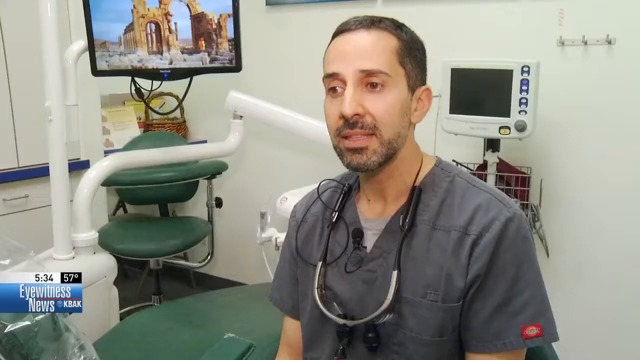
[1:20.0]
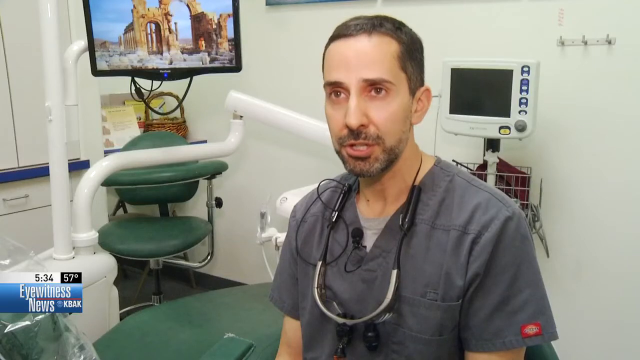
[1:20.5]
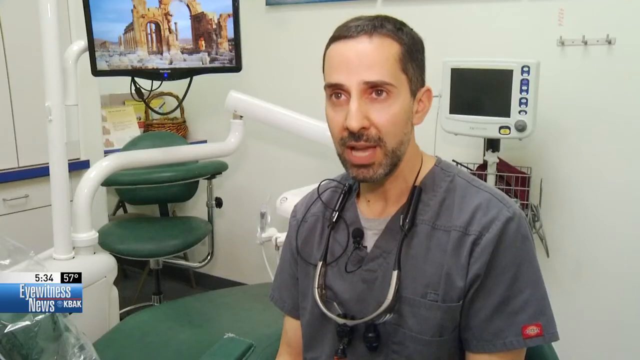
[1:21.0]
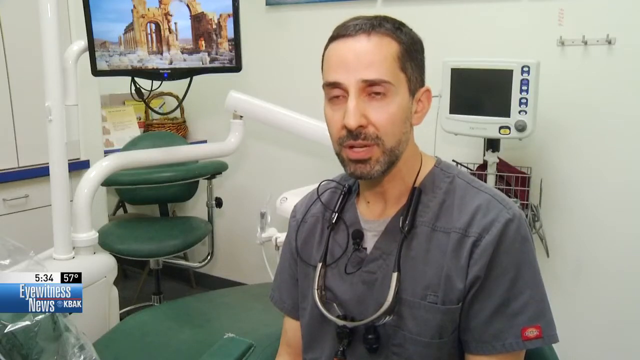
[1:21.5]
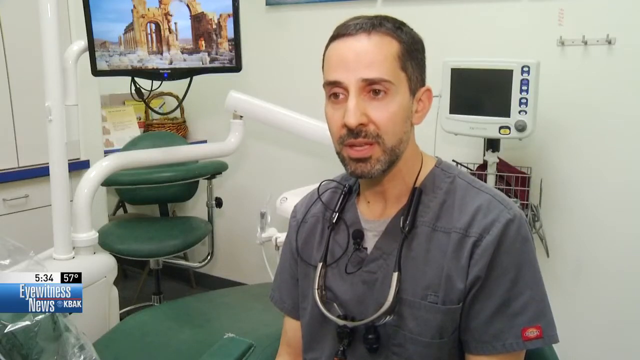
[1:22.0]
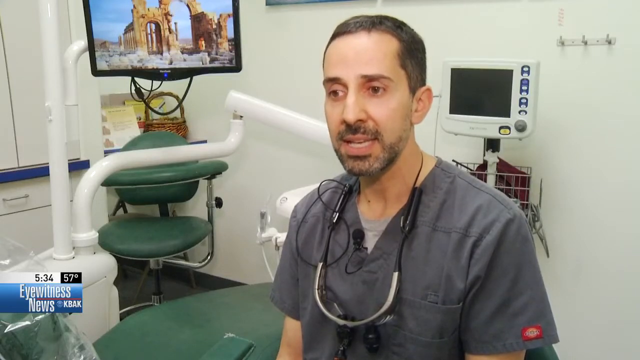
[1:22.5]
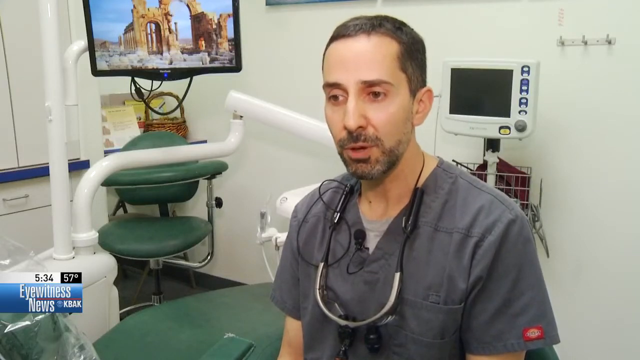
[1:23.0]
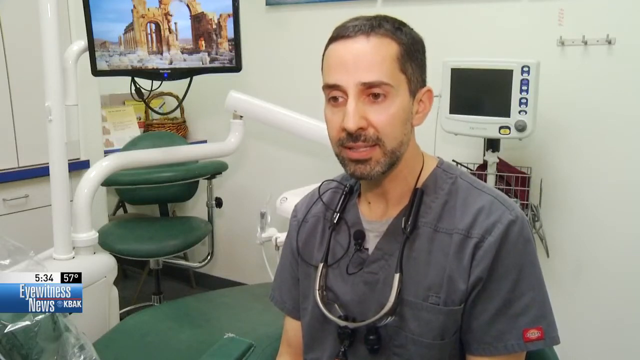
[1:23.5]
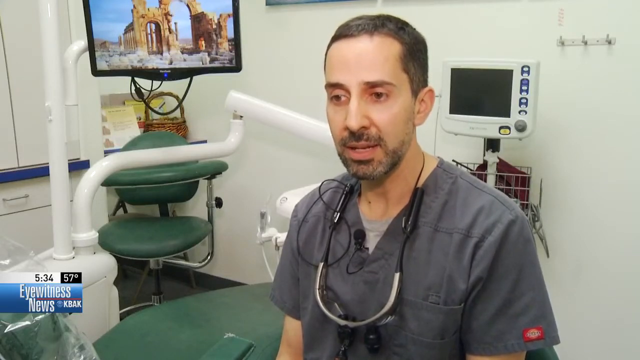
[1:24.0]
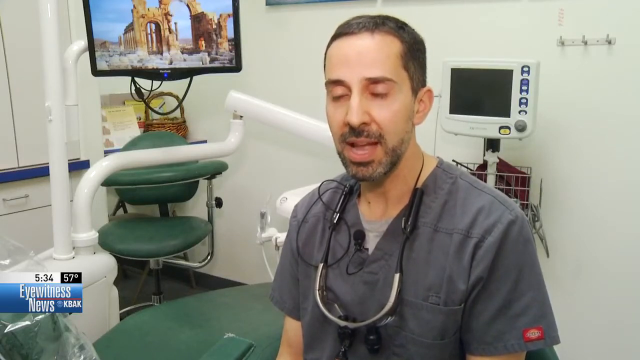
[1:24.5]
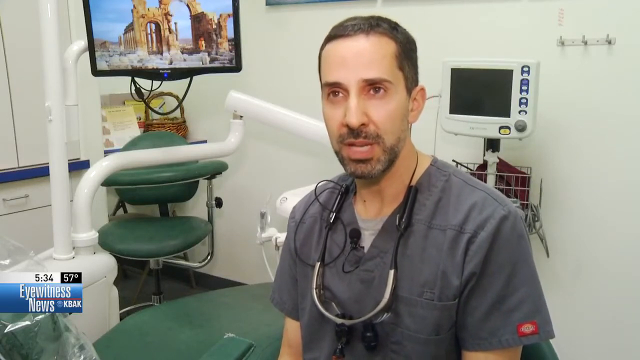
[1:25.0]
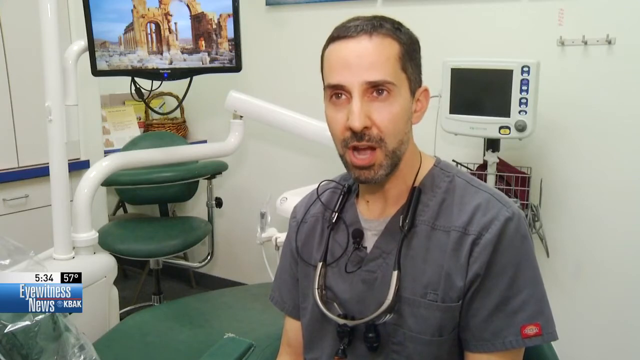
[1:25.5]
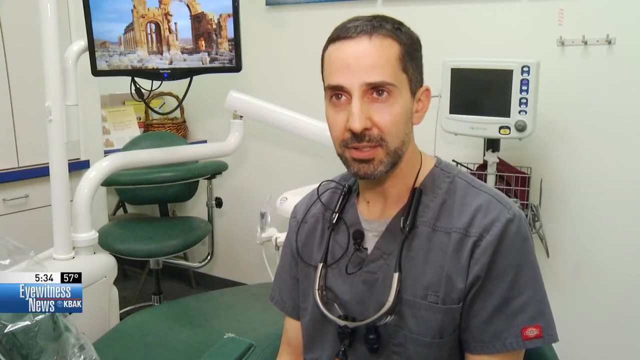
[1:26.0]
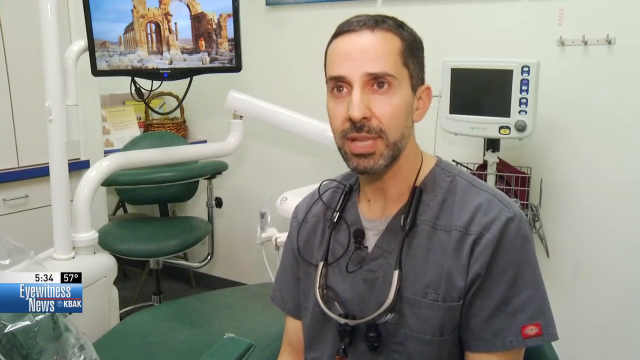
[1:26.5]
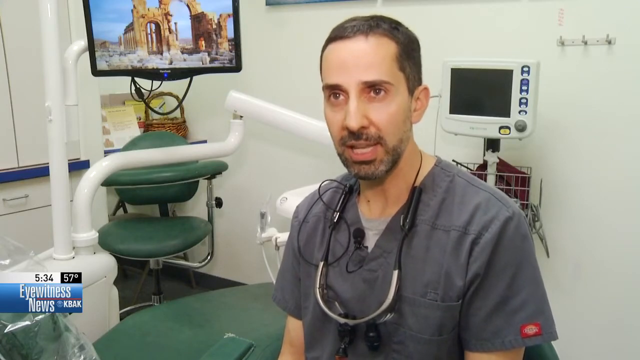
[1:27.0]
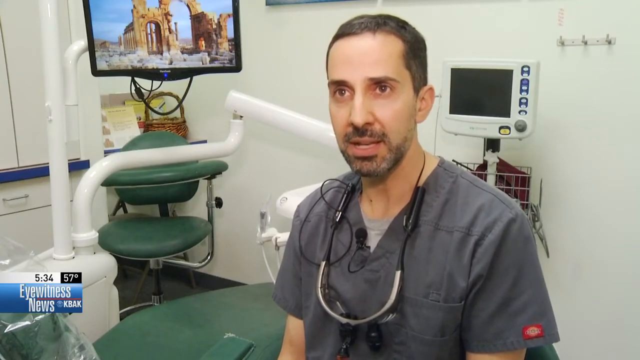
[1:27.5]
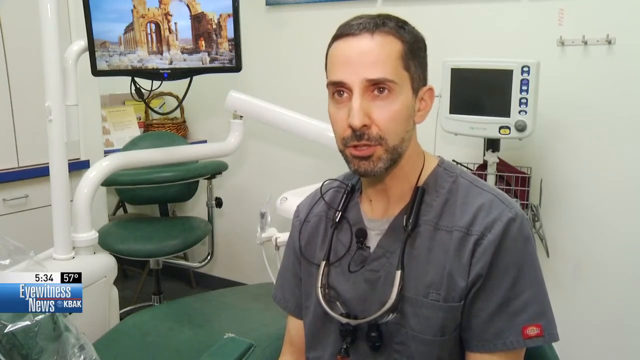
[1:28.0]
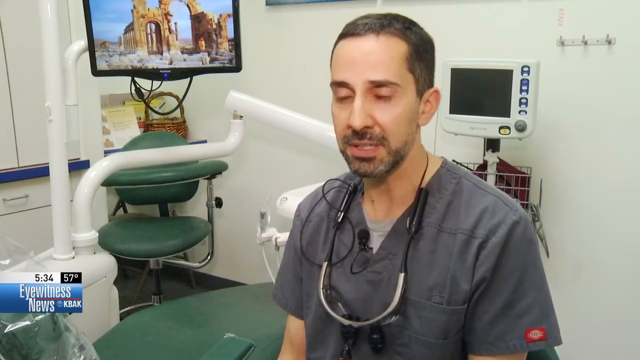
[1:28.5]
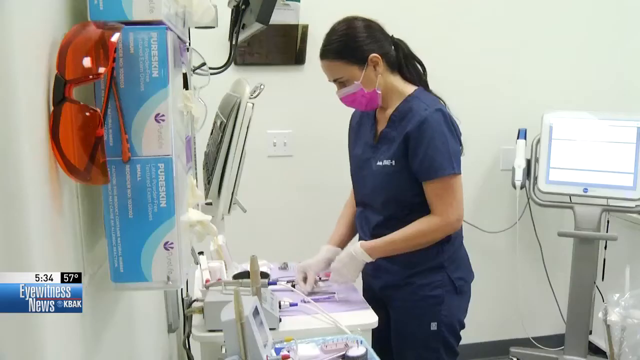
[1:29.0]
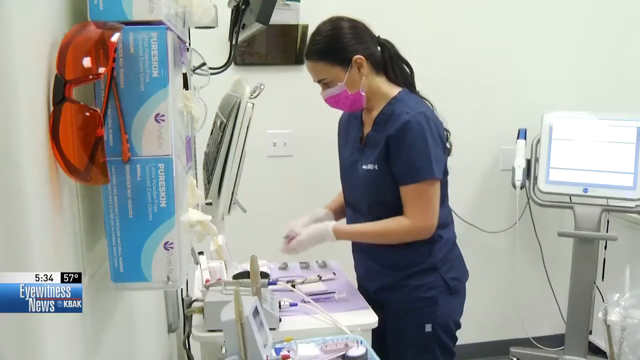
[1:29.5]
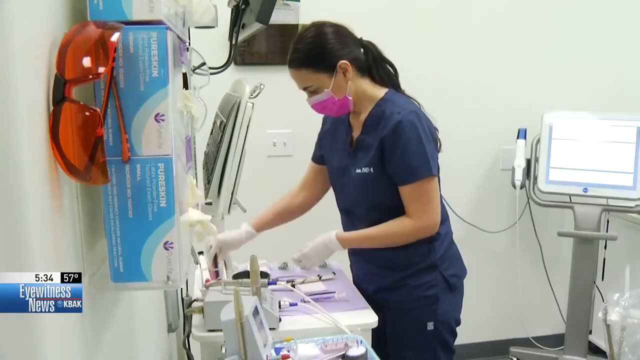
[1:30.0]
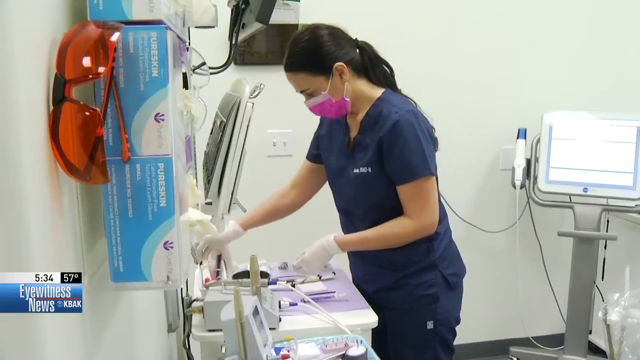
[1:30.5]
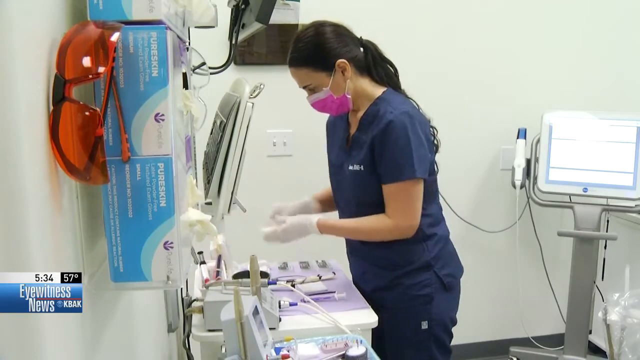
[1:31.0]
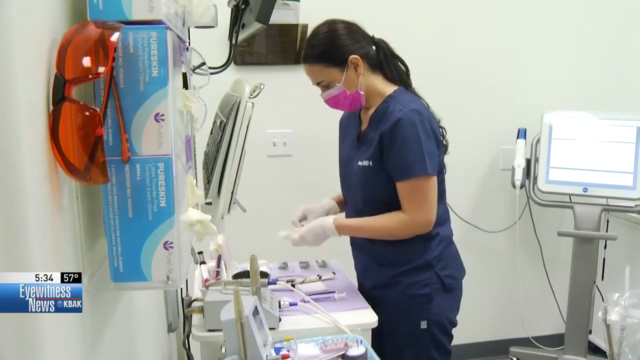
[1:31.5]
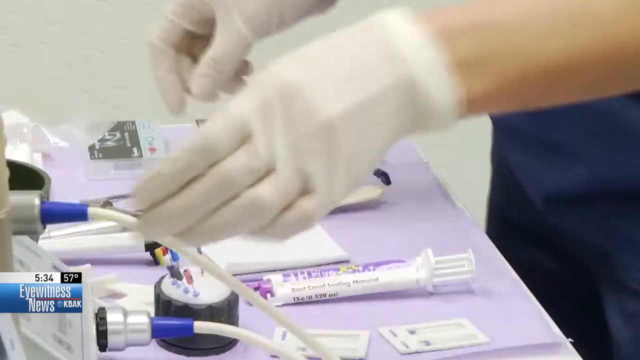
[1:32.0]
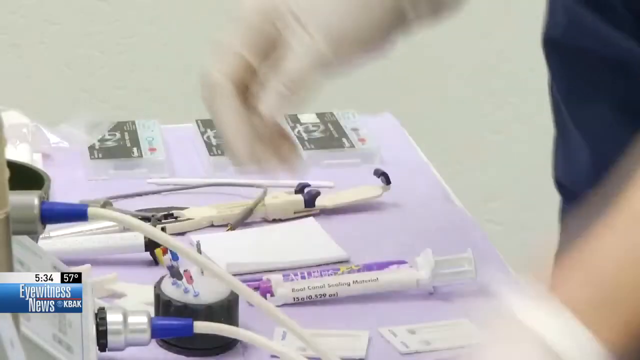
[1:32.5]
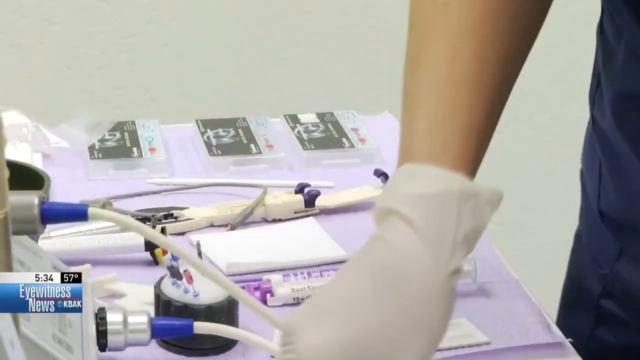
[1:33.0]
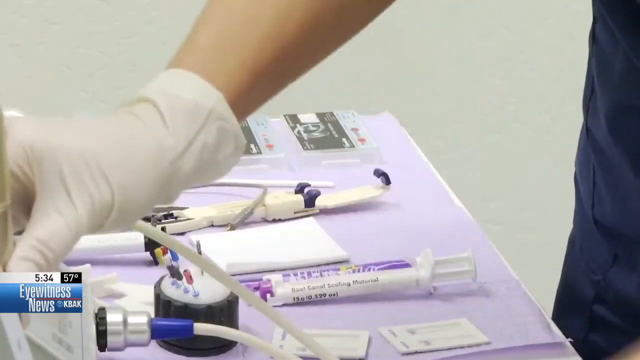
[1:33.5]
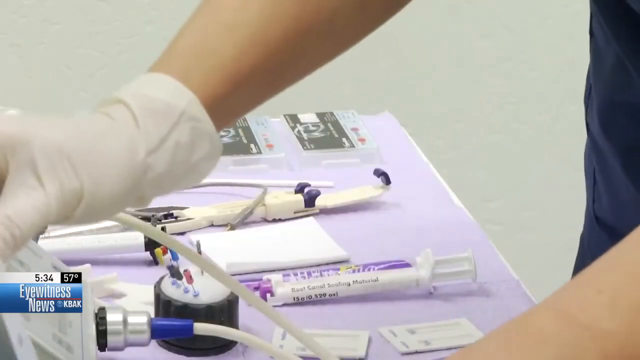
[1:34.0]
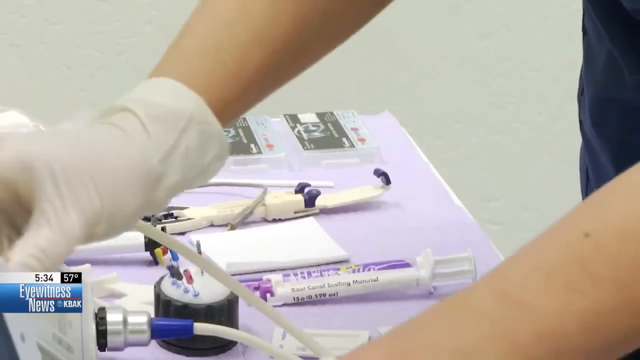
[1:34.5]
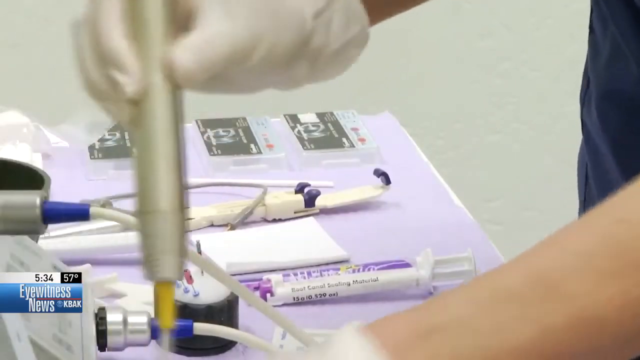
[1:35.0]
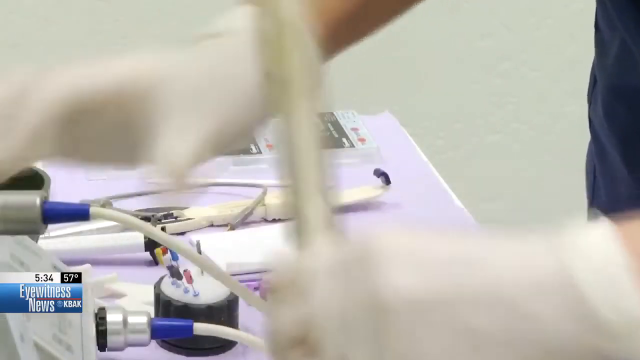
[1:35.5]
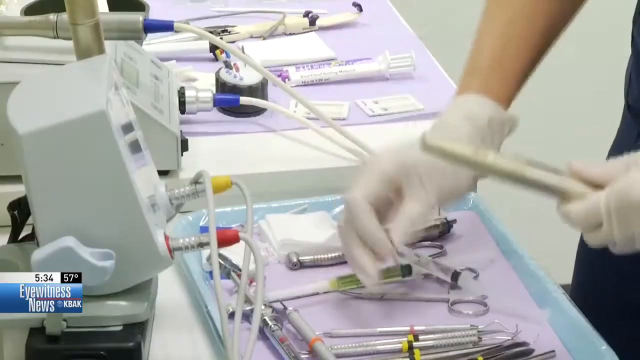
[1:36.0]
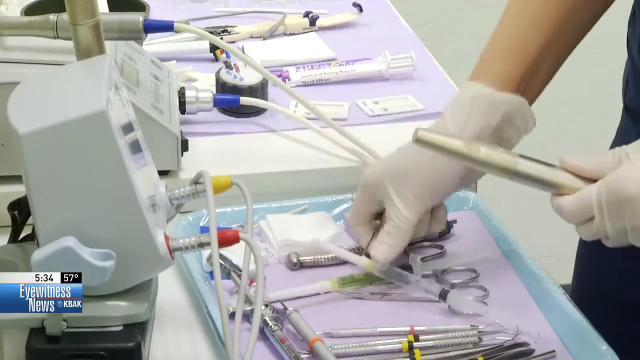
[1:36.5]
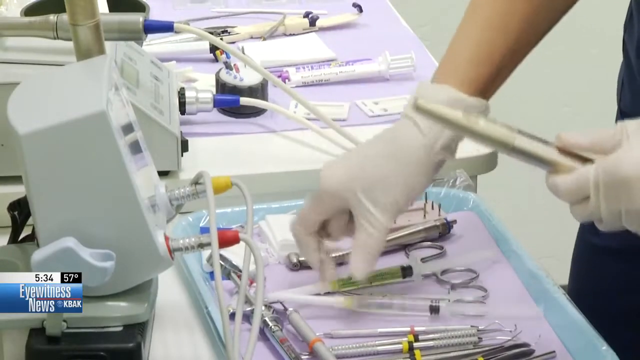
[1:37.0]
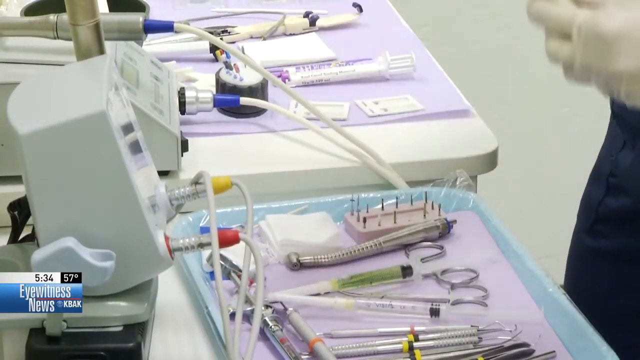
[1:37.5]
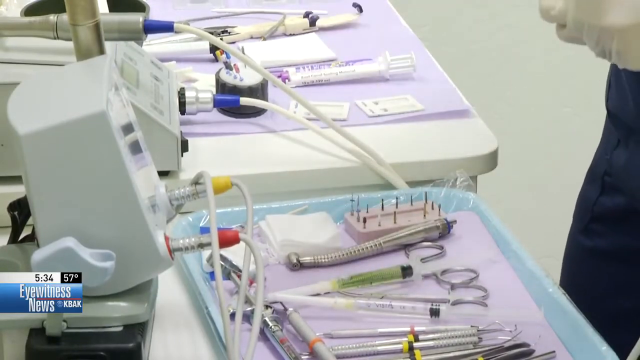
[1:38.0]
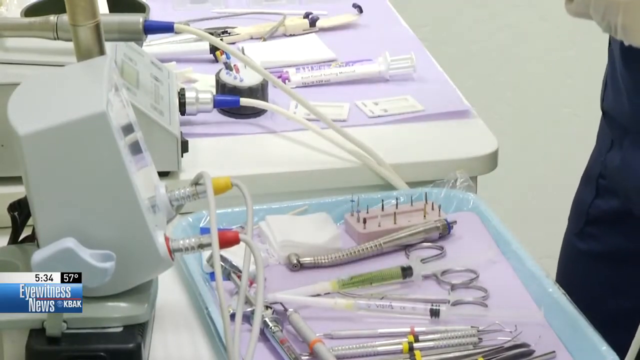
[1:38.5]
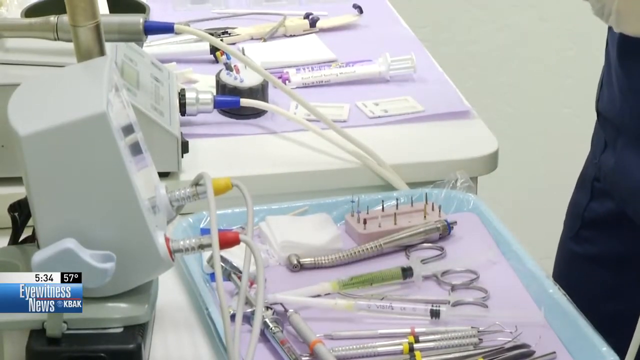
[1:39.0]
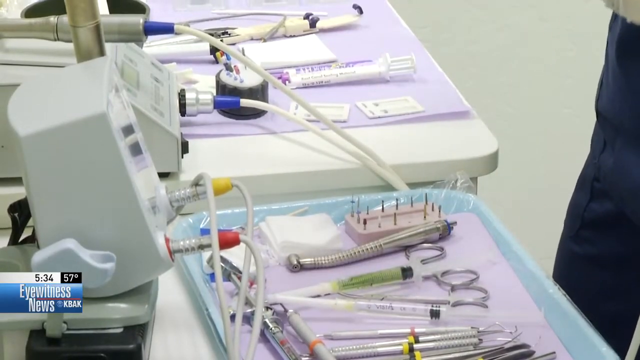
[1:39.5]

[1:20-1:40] A man in a gray shirt sits in a dental office speaking to the camera; only his head and mouth move slightly, and his shoulders move a little with his words. In a new view, a woman stands at a slight angle to the side, bent slightly over a table, wearing two white gloves. She reaches toward objects on the table, picking them up with both hands, putting something down with her right hand, and picking up a white tube with her right hand. A closer view shows just her hands and the table as she quickly moves objects around, picking things up and putting them back down. She picks up a white cylinder with her right hand and passes it to her left, then picks up a syringe with her right hand and drops it back on the tray. Her hands lift out of view, leaving only the tray and a small part of her clothed abdomen visible while her arms move out of frame; she has lifted the object out of view, and the counter with the tray of dental tools remains.